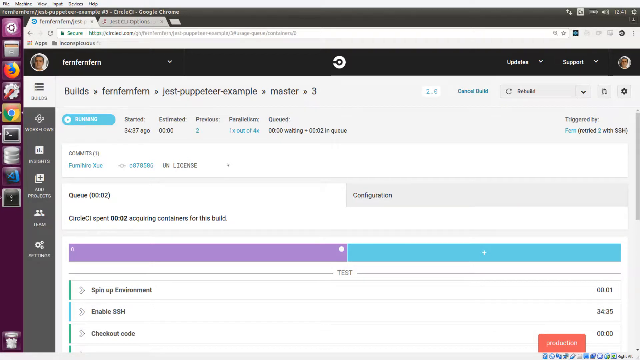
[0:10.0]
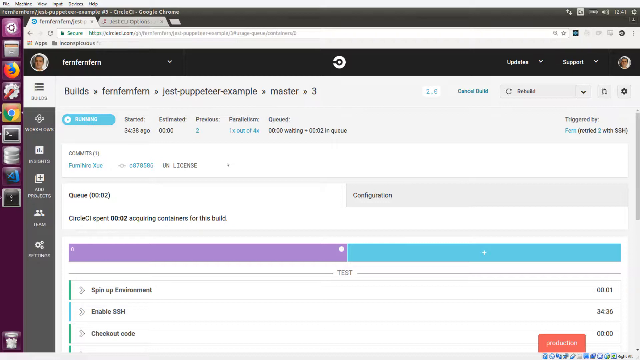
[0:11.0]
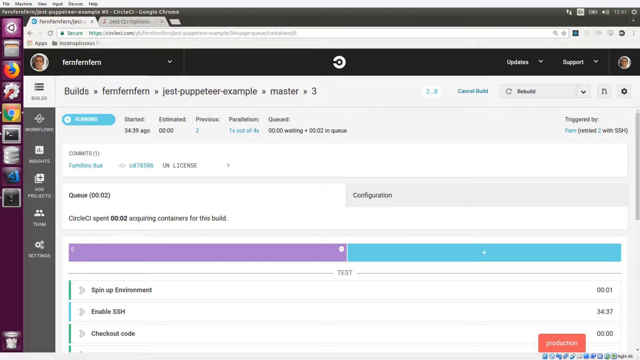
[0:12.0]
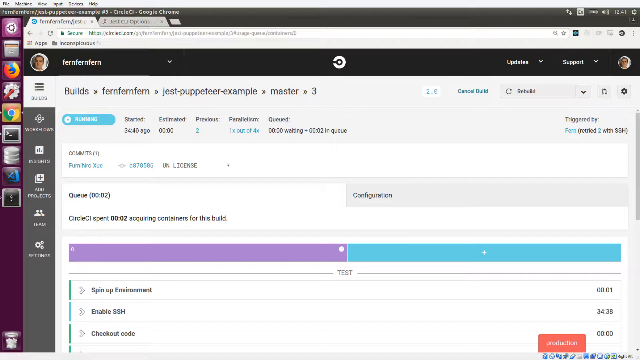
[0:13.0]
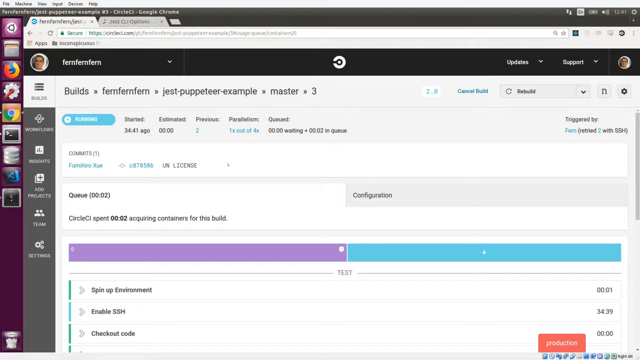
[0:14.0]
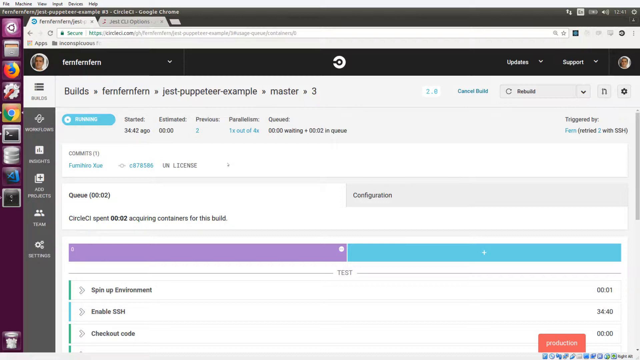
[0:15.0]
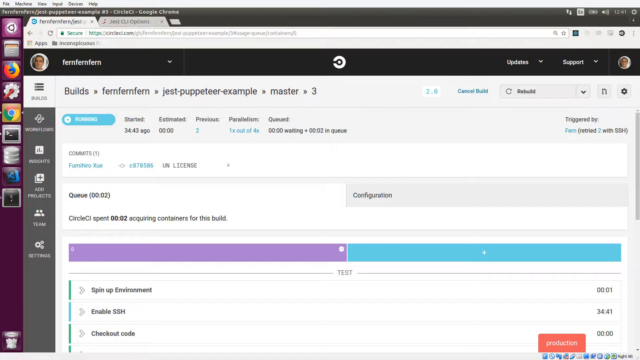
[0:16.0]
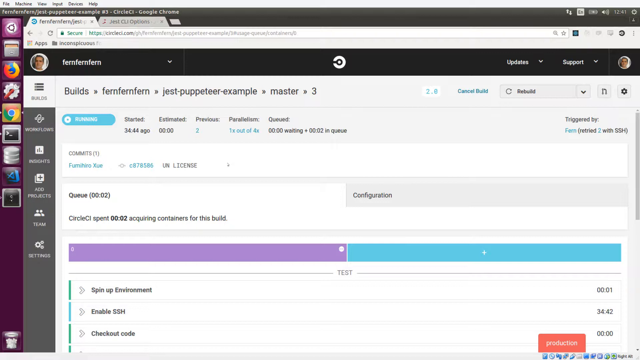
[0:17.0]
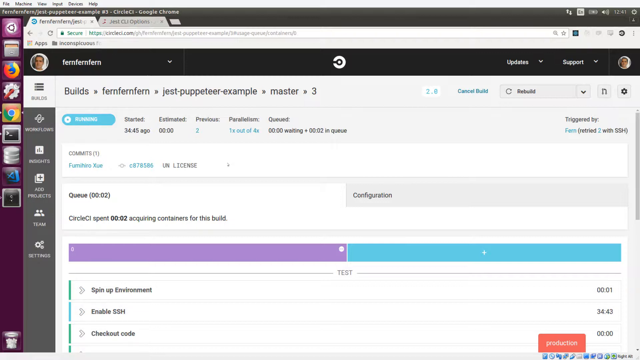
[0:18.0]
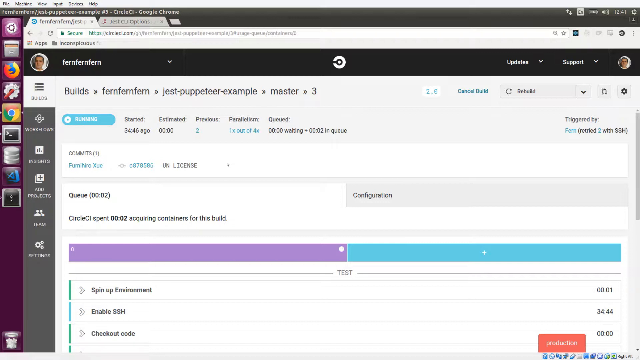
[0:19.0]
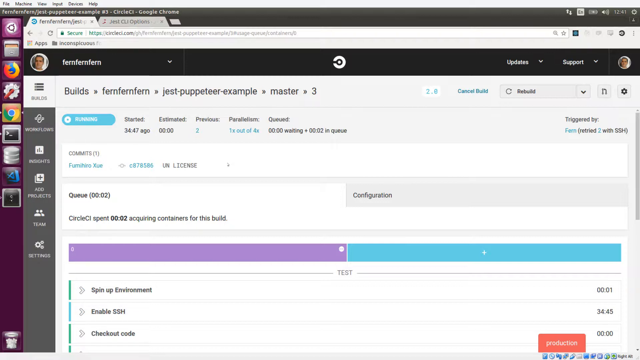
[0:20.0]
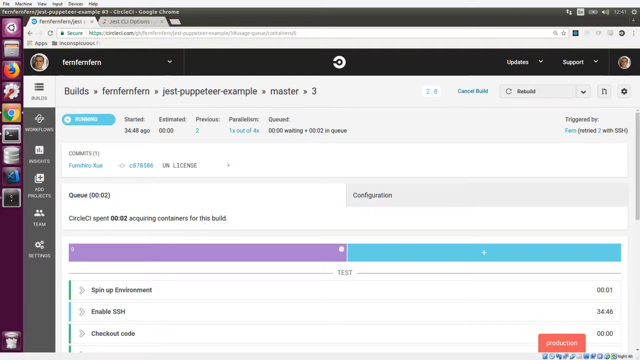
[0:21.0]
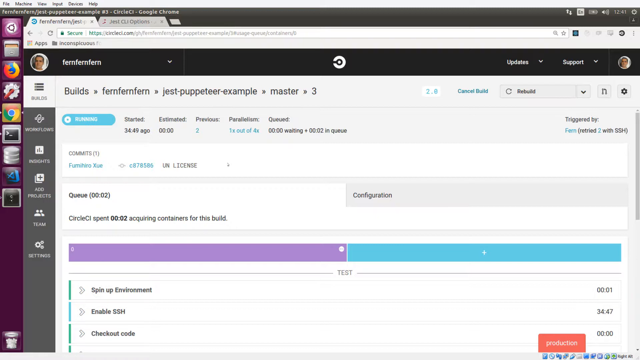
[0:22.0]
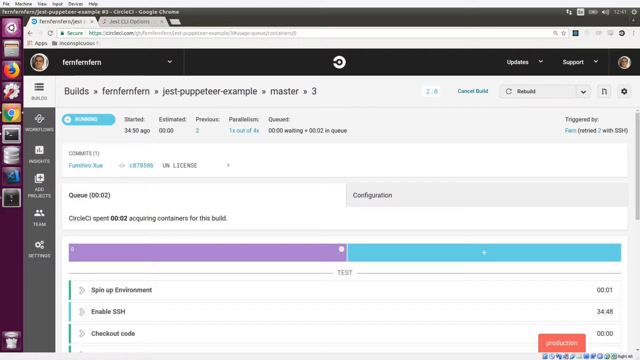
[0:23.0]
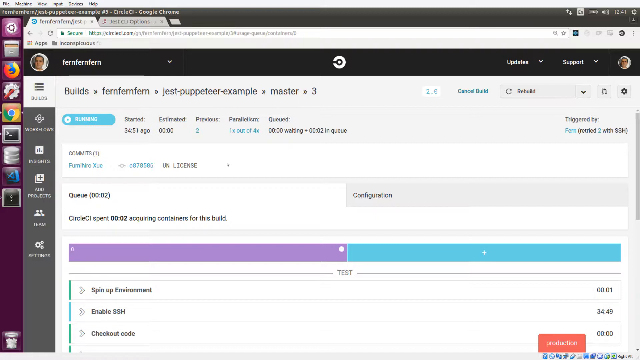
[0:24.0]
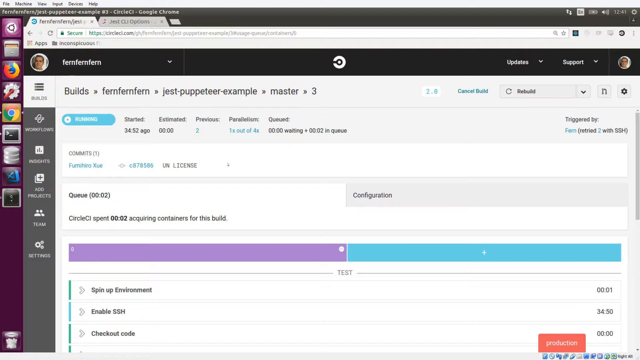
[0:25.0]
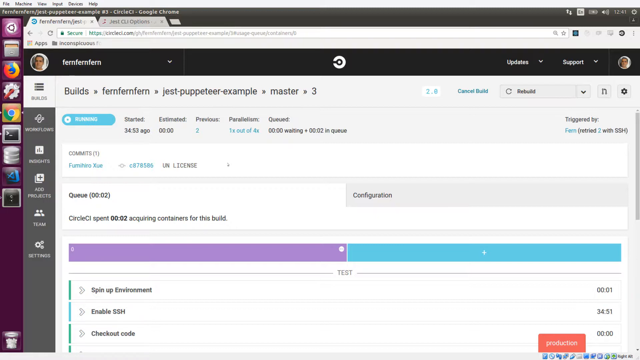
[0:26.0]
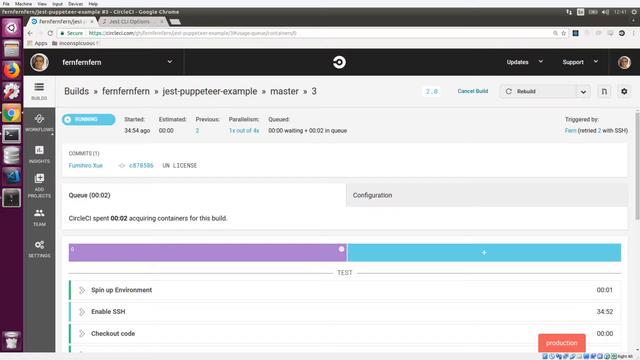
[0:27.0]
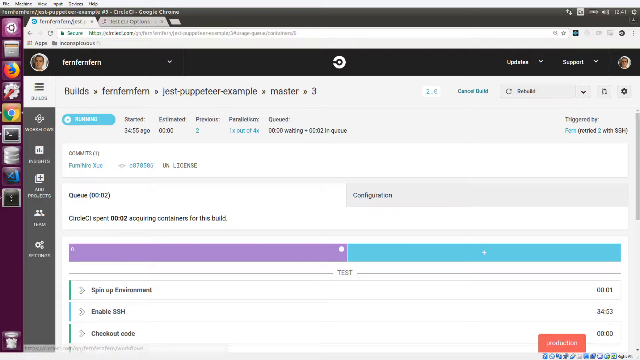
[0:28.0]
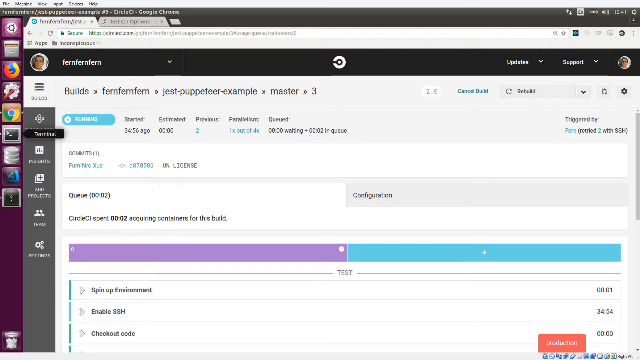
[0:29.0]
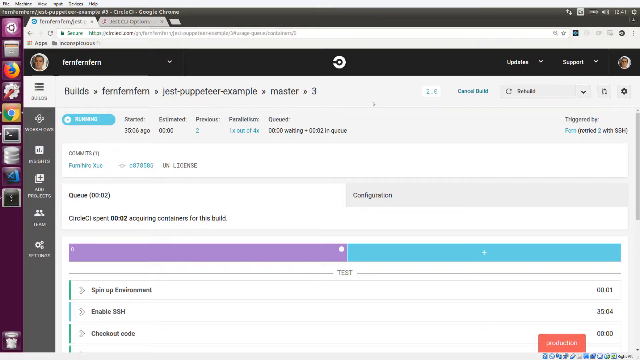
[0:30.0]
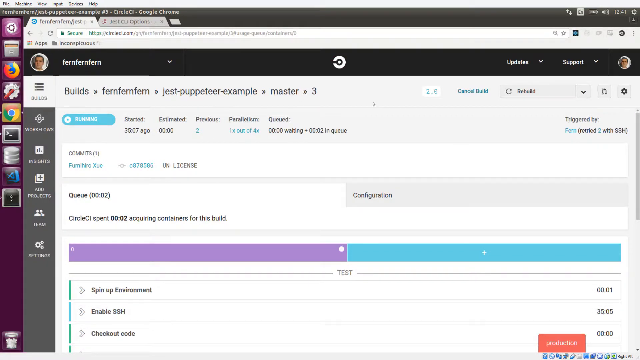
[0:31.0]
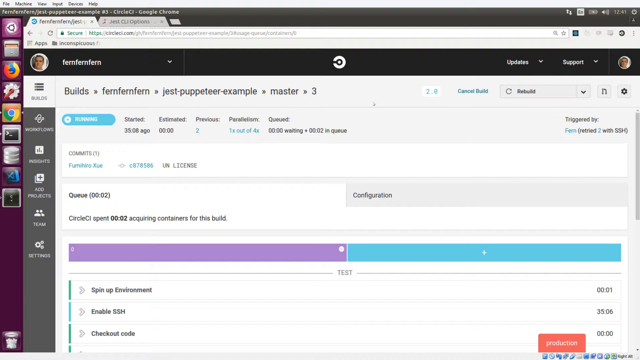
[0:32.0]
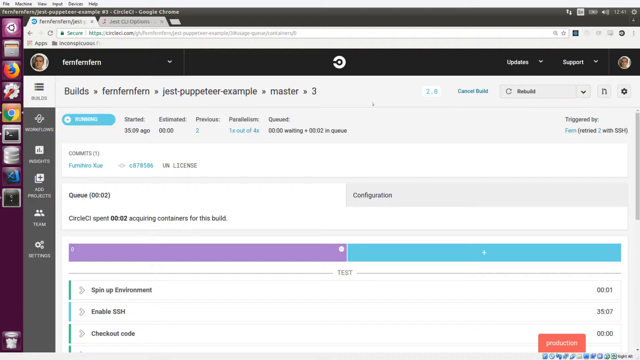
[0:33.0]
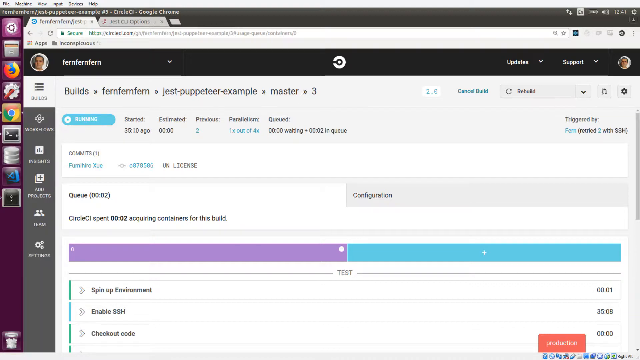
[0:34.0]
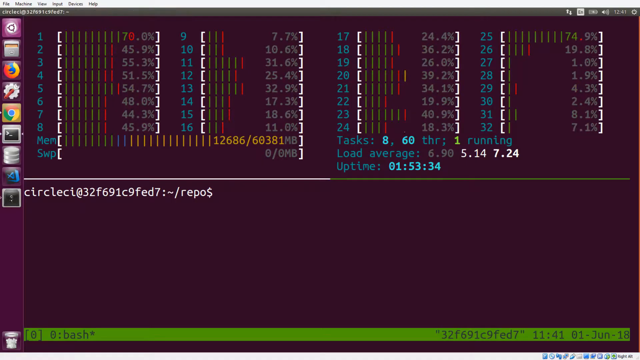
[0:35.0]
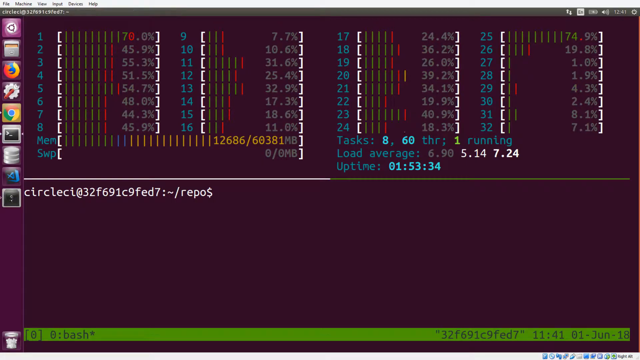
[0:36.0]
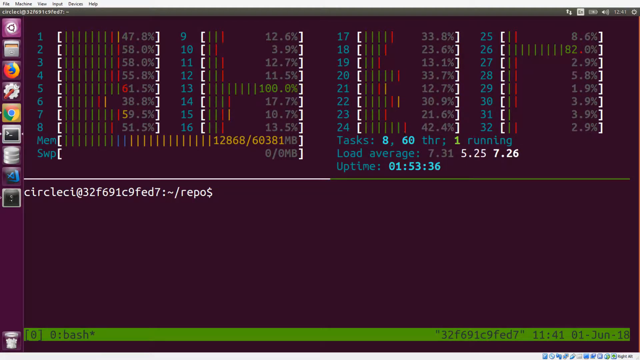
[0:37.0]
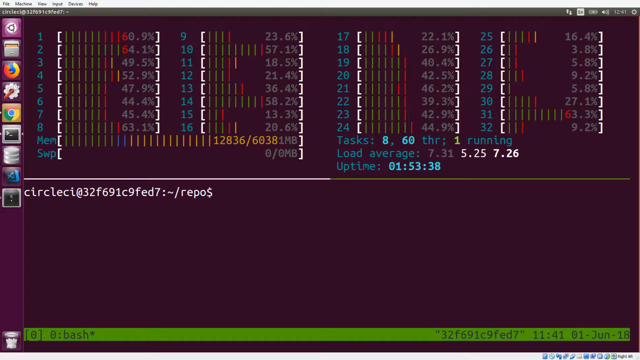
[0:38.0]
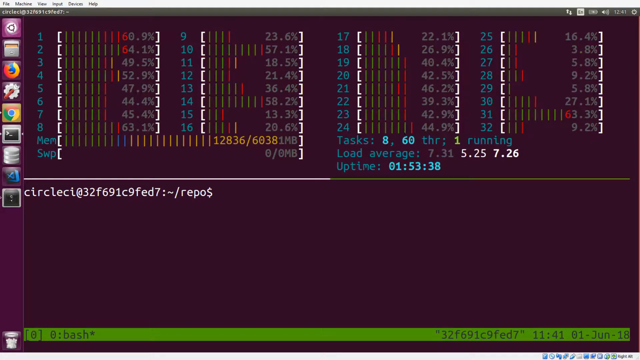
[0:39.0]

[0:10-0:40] A front page, possibly a summary-type page, seems to give information about the build being used, including a name, possibly a Jest puppeteer example. Someone clicks through some of the icons on the side. Several icons are visible, including what looks like a Google icon and a Firefox icon. The page shows a large amount of data and percentages, apparently related to testing or a build for some kind of developer.